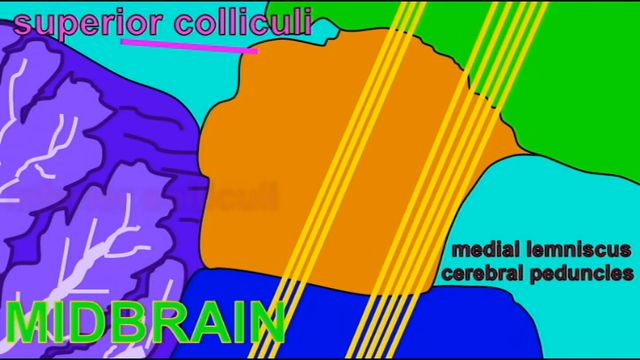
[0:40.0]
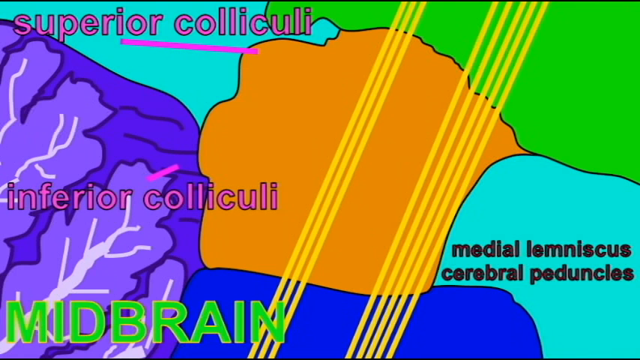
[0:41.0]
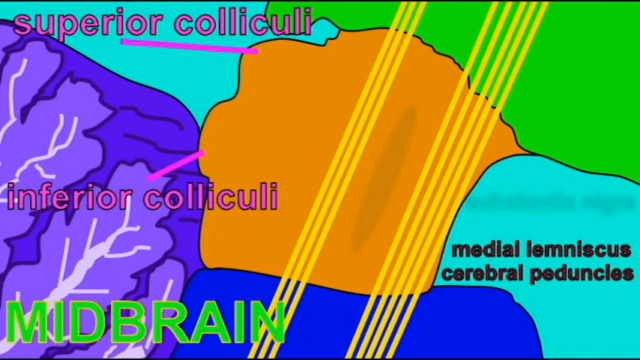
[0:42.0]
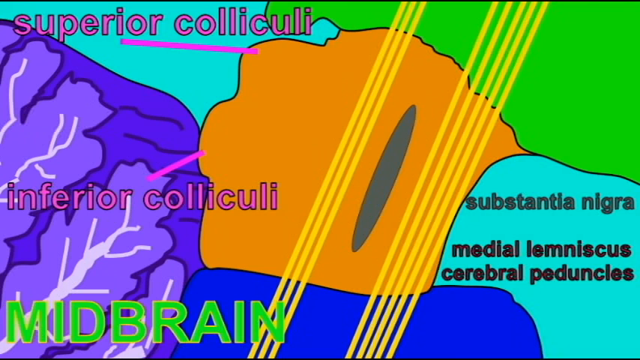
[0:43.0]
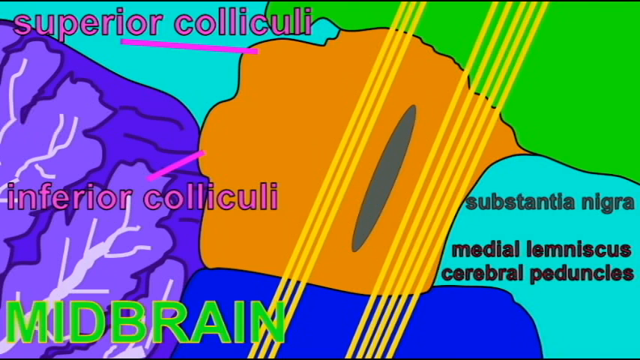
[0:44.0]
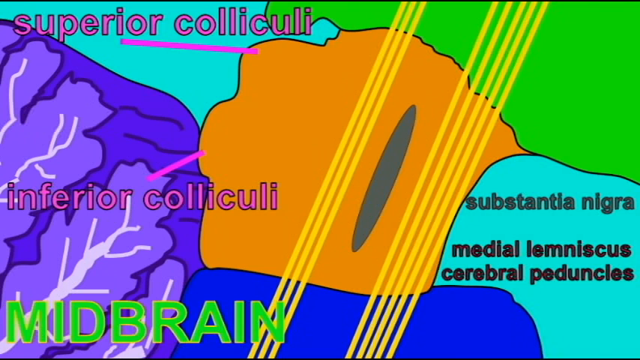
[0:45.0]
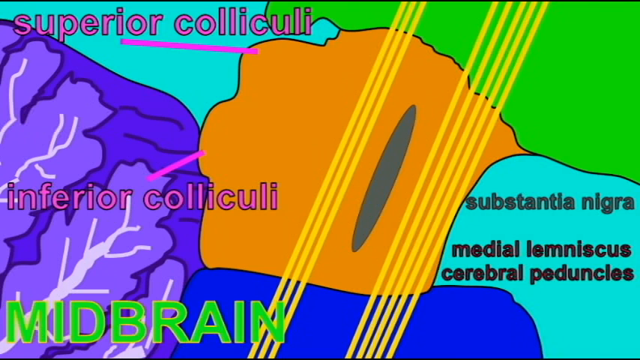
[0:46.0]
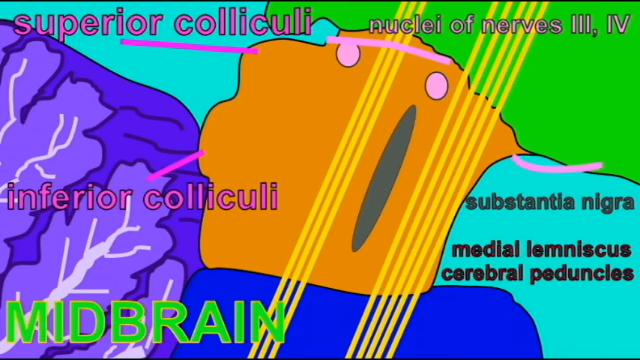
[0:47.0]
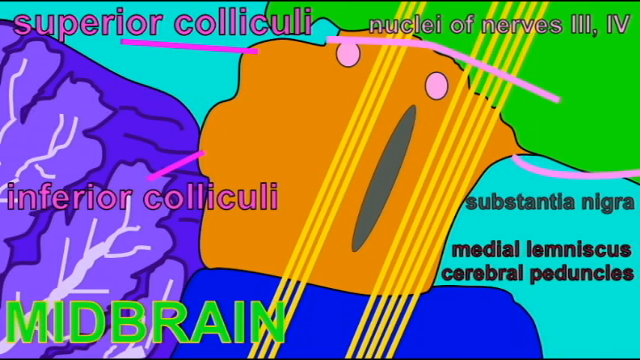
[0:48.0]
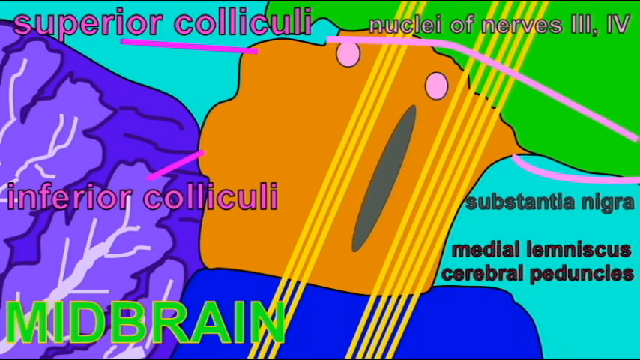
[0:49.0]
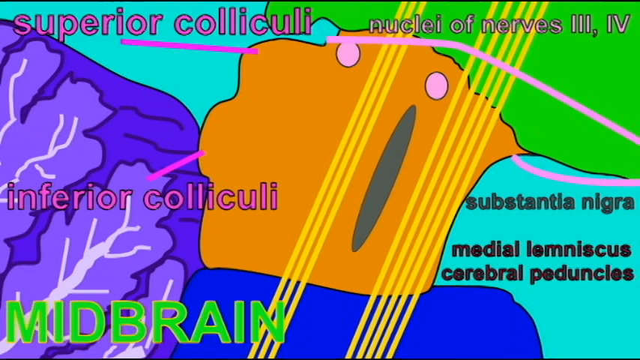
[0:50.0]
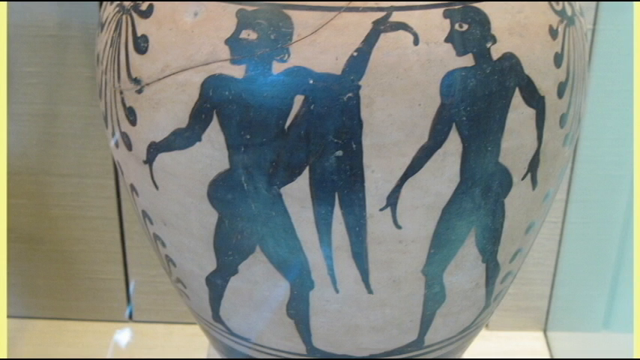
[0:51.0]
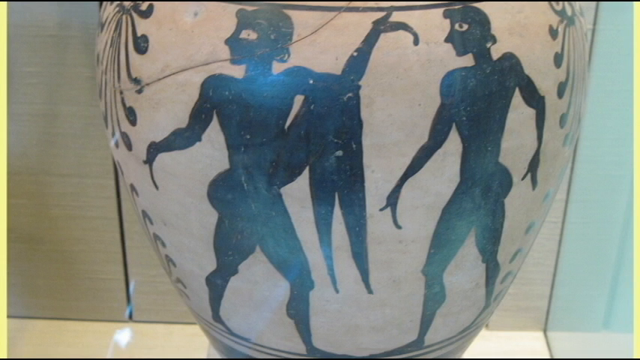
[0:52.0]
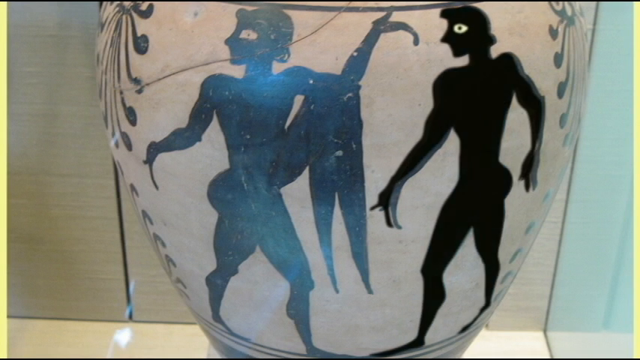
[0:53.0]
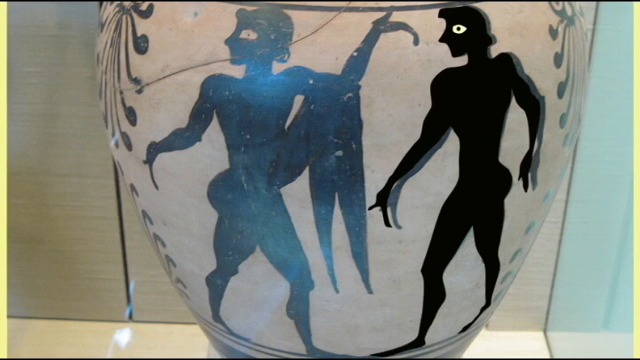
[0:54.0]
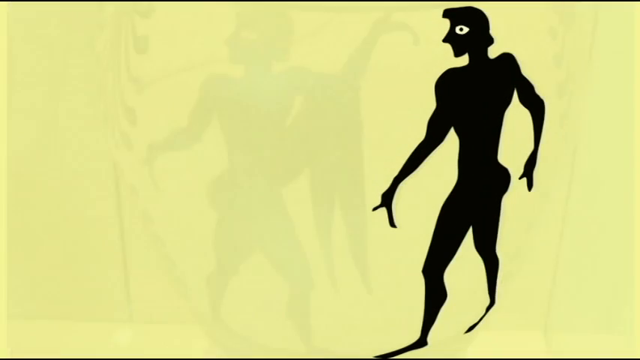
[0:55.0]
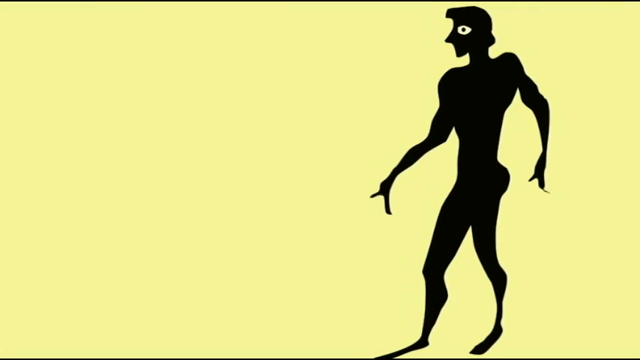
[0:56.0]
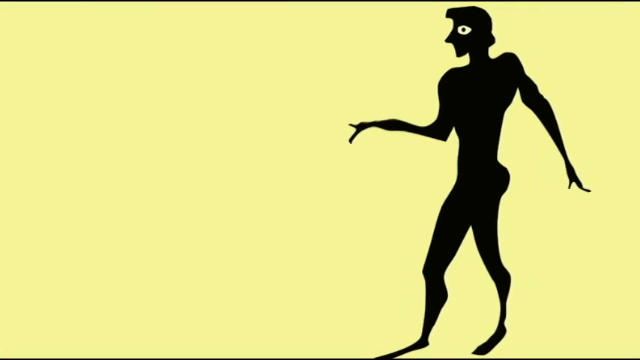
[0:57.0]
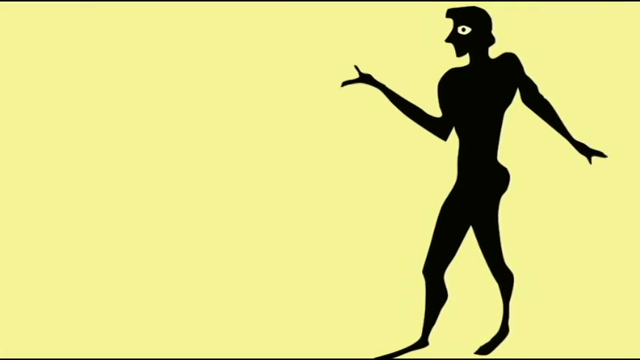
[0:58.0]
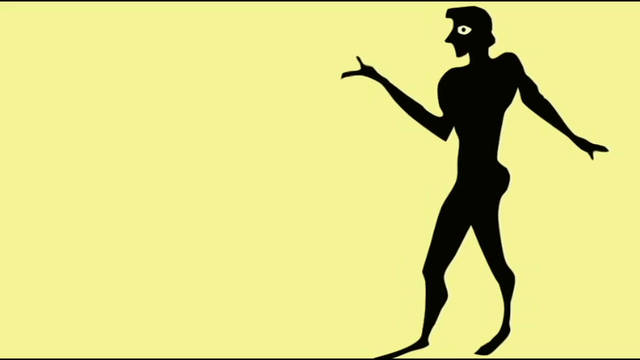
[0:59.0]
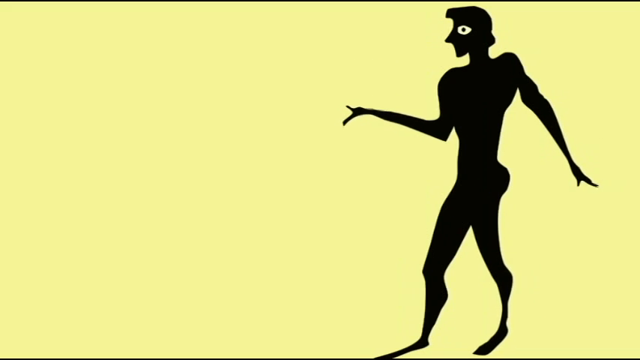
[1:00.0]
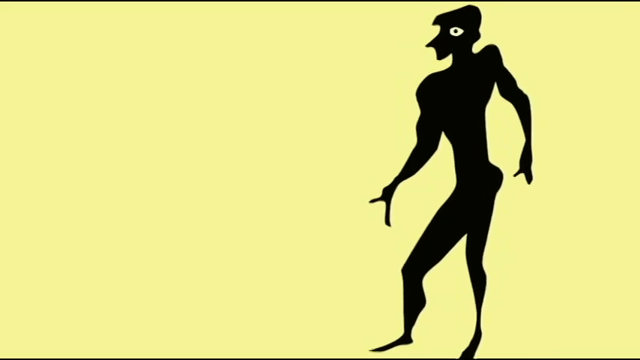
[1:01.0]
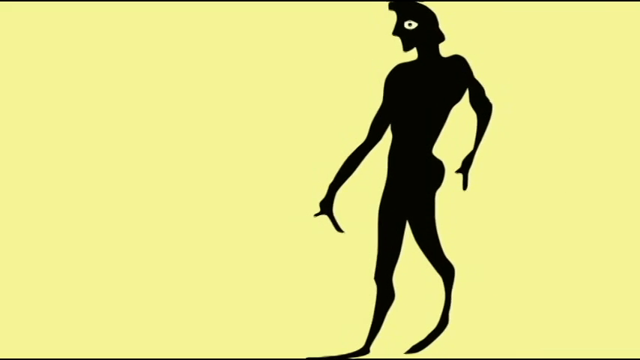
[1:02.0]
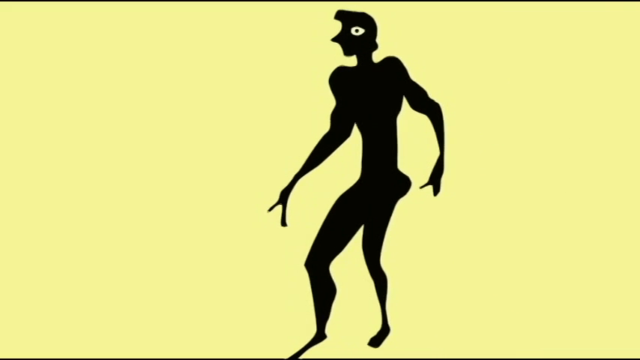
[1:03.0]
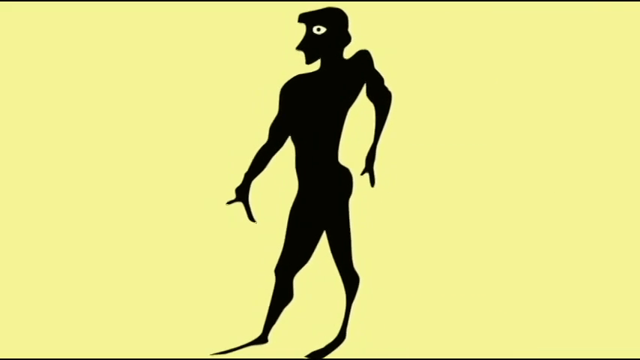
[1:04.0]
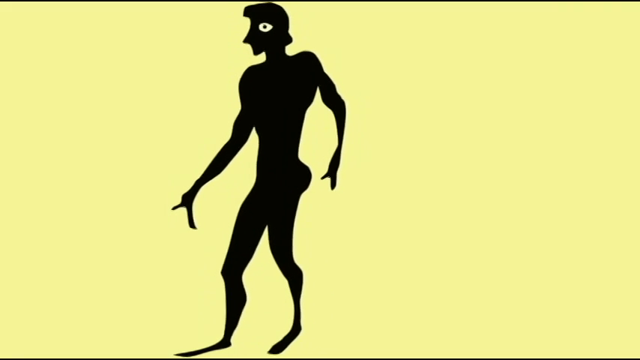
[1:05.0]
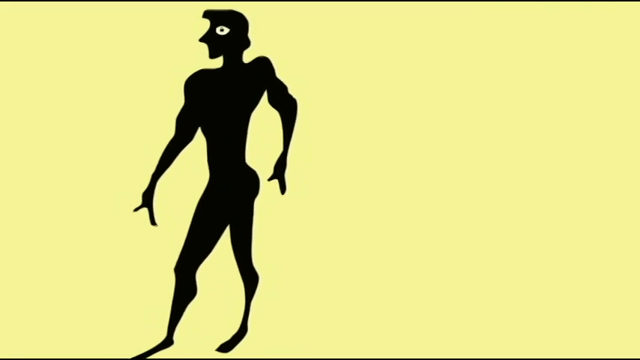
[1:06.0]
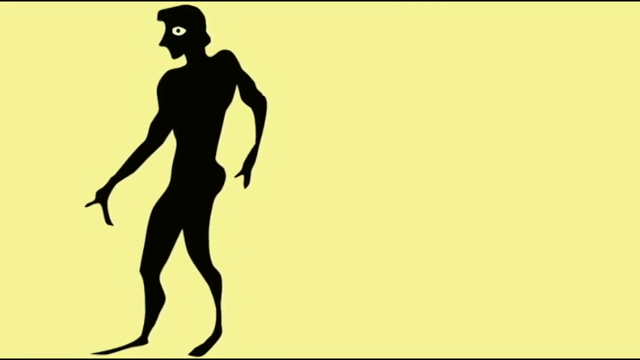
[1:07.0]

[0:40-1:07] The video continues to show what was shown before. The screen then changes to two objects that appear to be a painting of a human, painted in black, one on the right-hand side and one on the left-hand side. The one on the left disappears, leaving only the one on the right, which seems to move its arms up and down and then appears to walk toward the left. It appears to be a human, apparently a male figure.